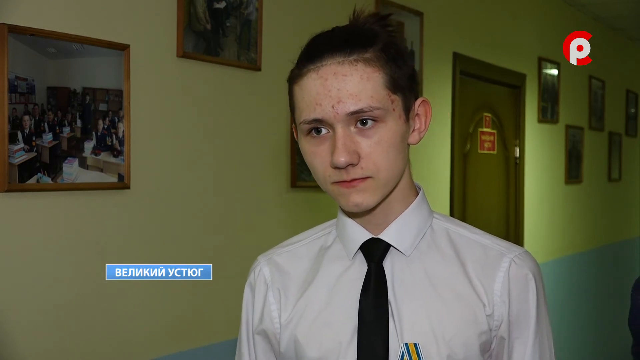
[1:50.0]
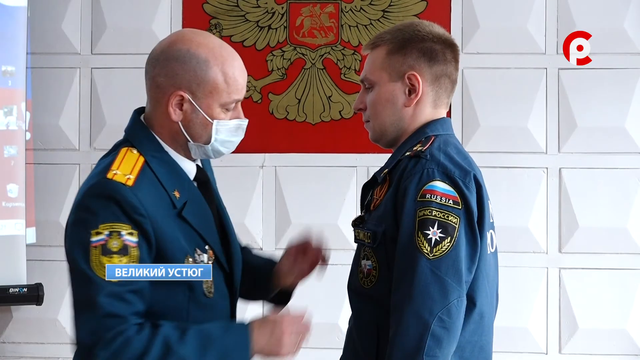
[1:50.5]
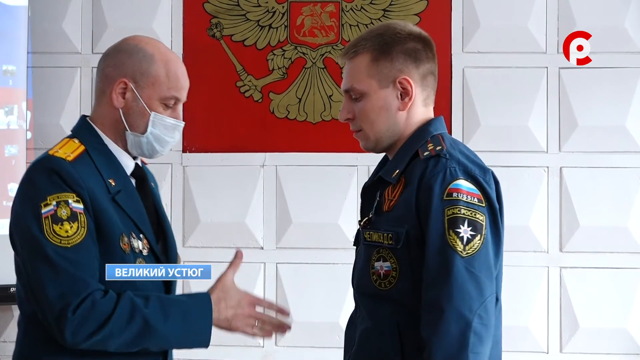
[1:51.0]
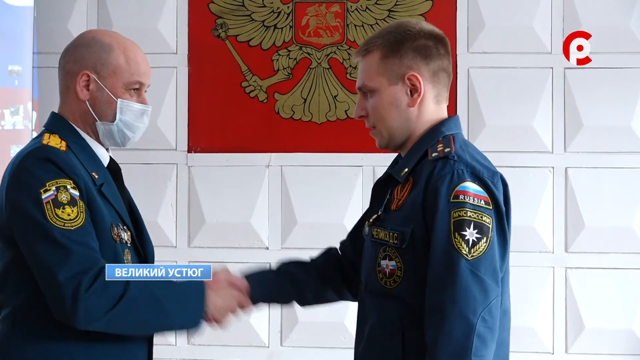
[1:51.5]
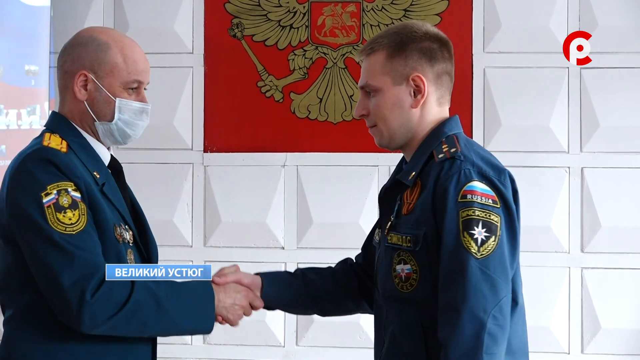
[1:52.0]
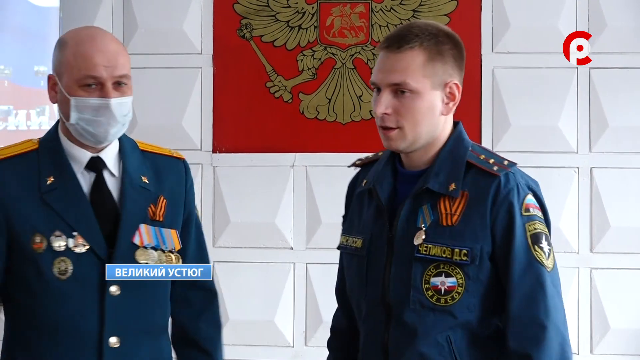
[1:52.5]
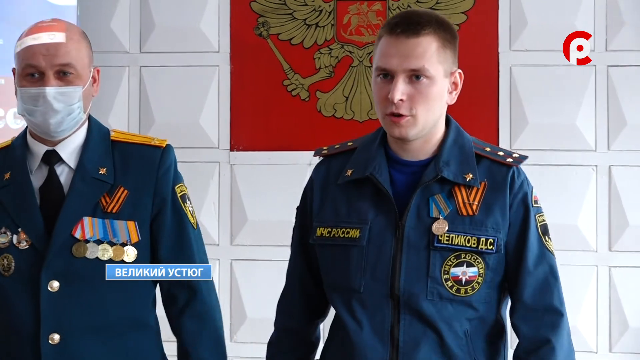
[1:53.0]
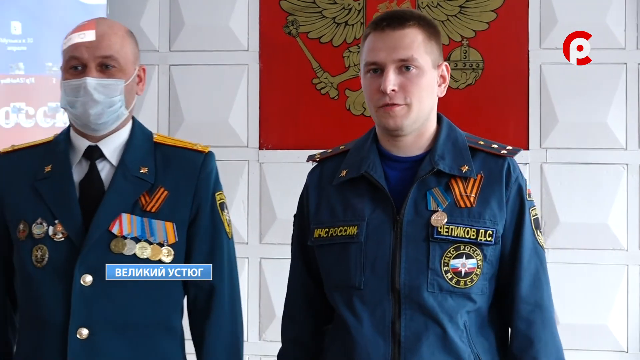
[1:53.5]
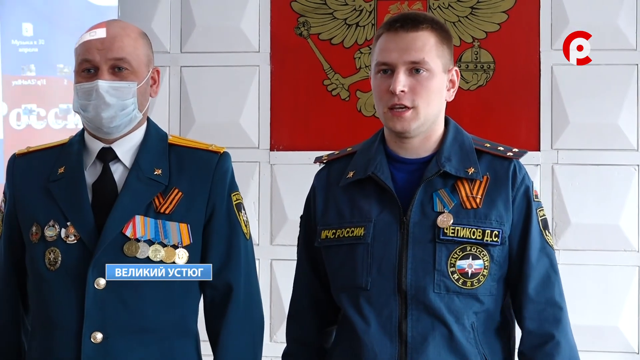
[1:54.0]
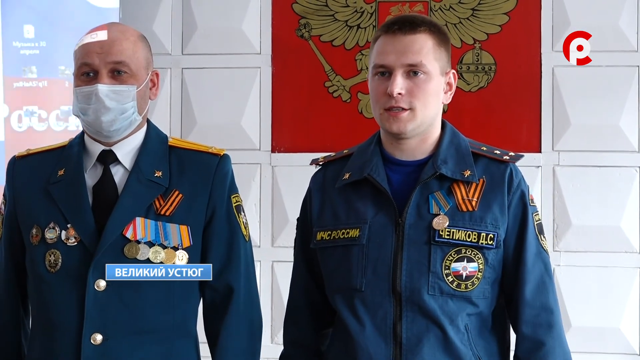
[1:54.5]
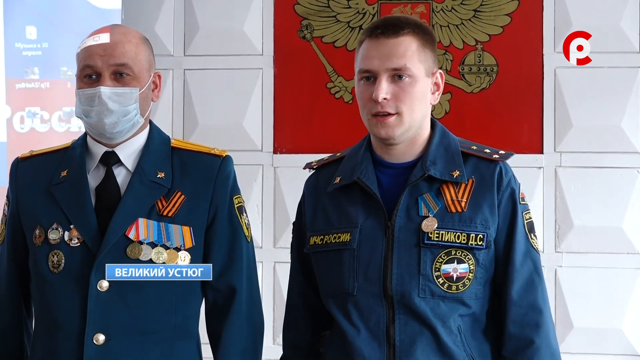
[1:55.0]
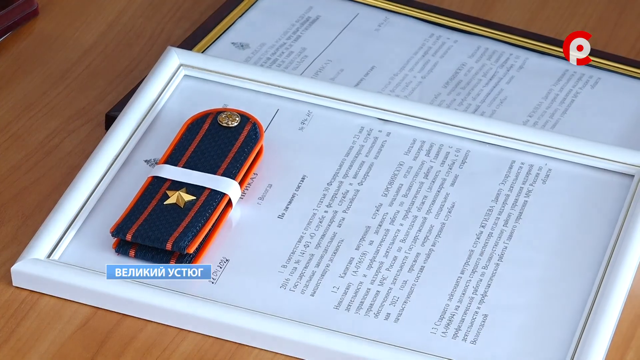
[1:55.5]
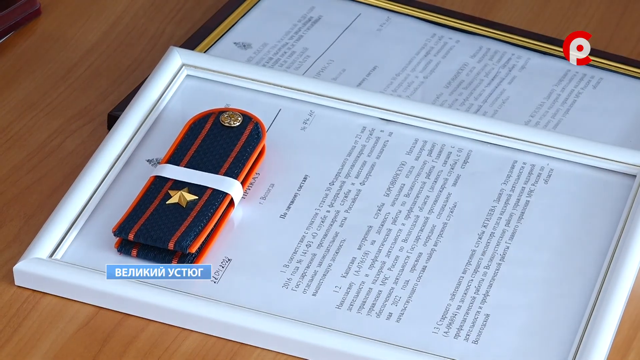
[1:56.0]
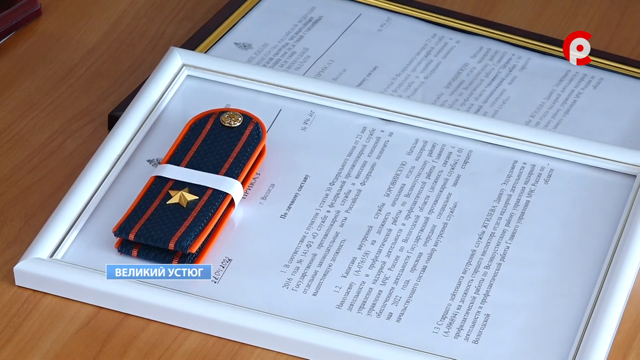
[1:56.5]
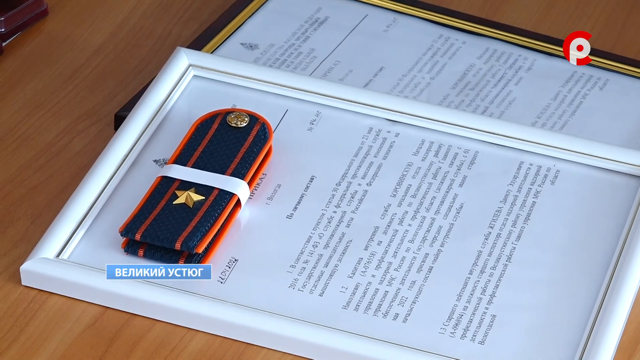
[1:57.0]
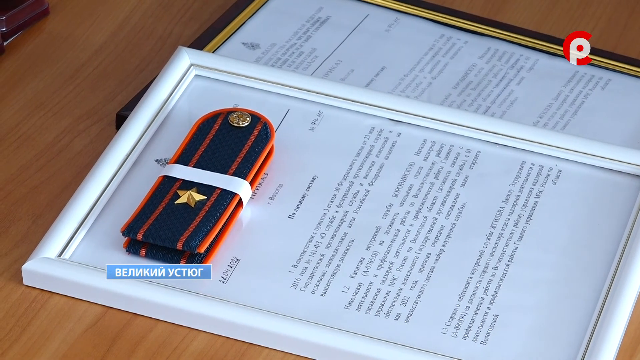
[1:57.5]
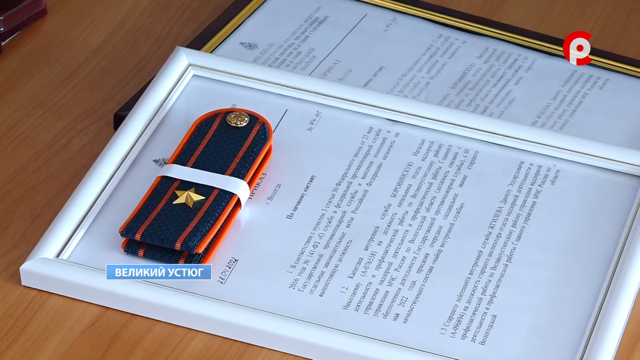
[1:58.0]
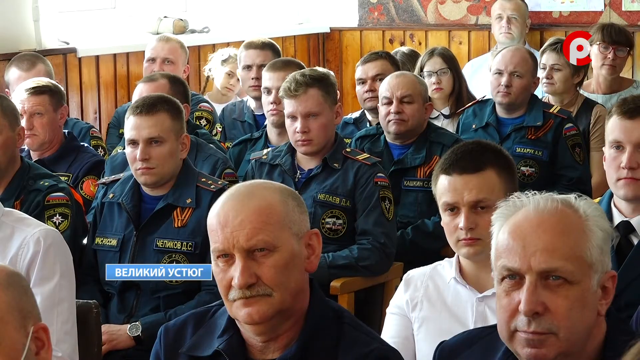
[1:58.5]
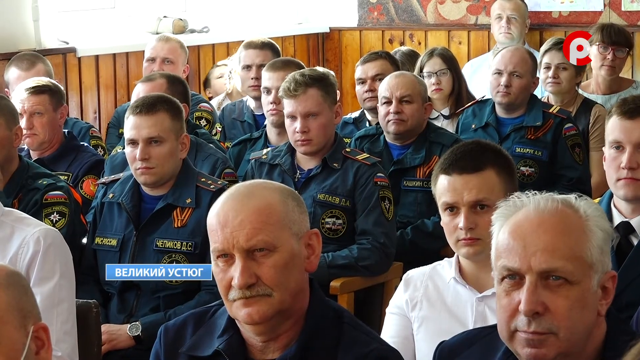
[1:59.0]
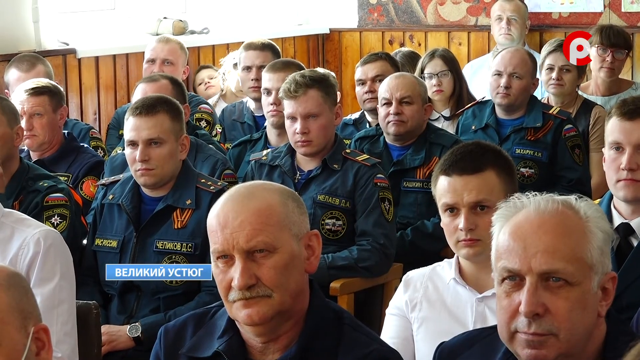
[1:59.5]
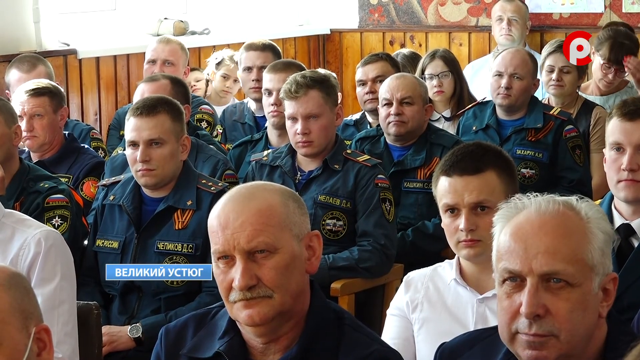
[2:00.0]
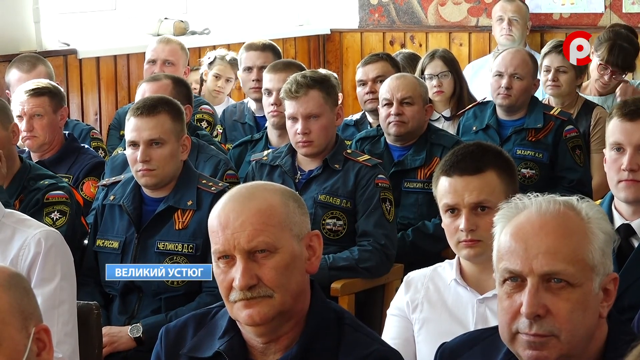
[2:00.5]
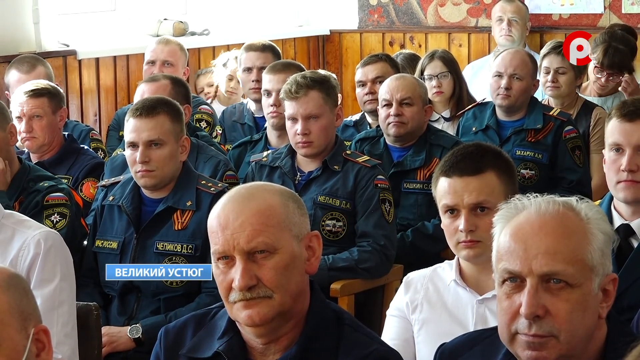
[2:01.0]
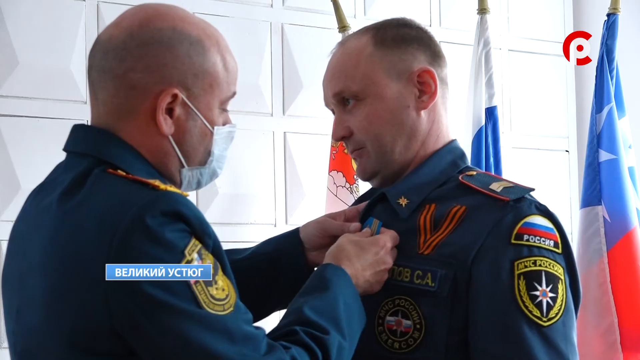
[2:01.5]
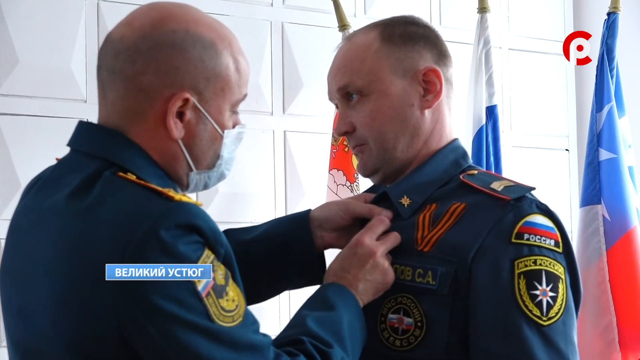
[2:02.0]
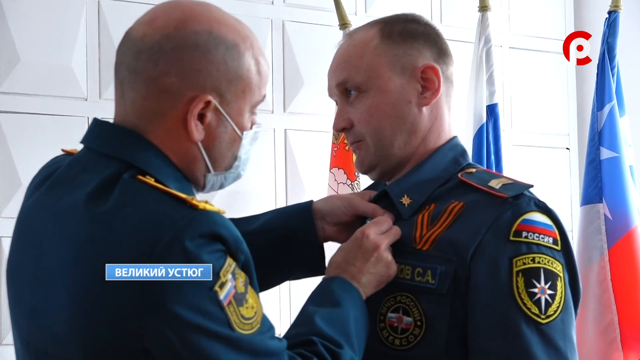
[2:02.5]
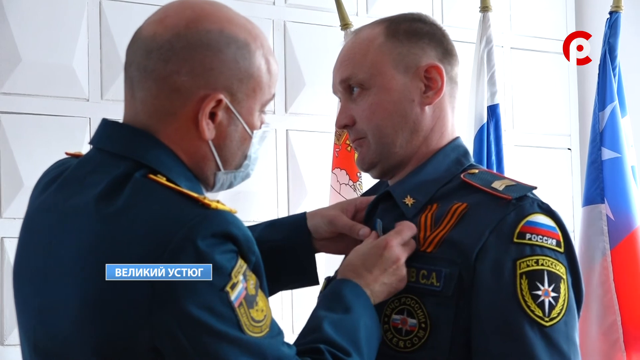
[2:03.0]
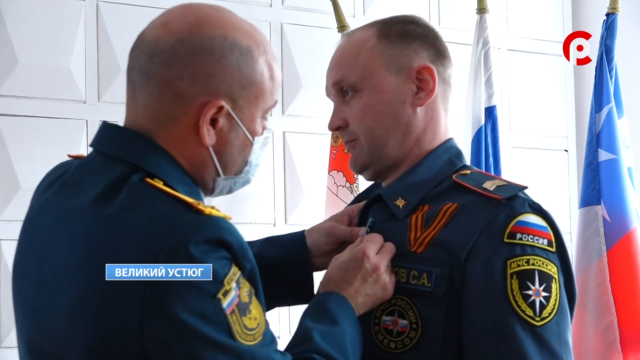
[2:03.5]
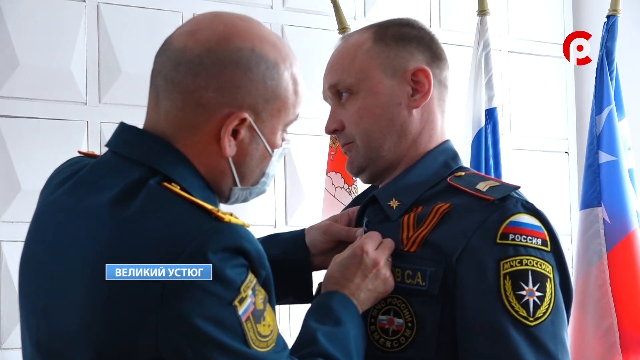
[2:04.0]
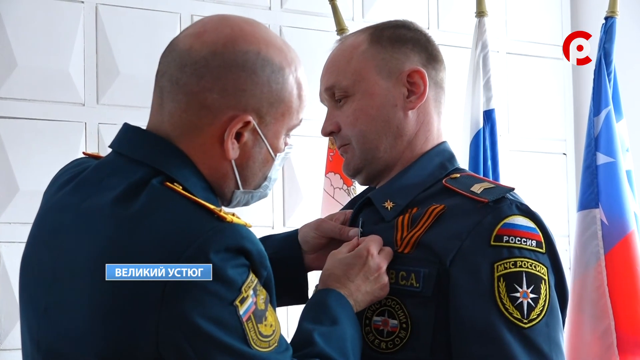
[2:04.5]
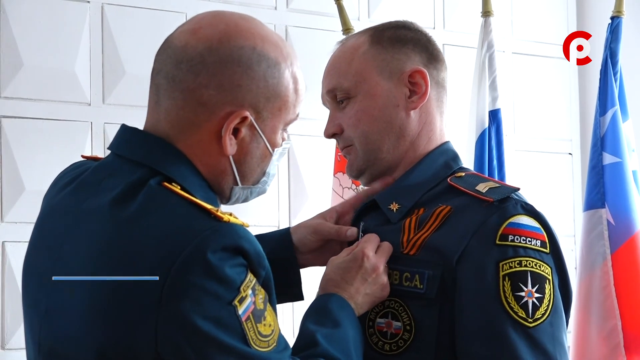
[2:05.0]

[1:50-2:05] The officer with all the medals pins a medal on another military man, apparently in his early 30s. The video cuts to another certificate and another medal, then to the people, and the last image shows him pinning a medal on an older man, possibly in his late 30s, before it cuts out. The paneling seen before appears to be part of the same room, suggesting the shots are different views of one room. The younger soldier receiving a medal has a patch on his jacket arm that says "Russia", indicating a Russian military force being decorated, alongside civilians.